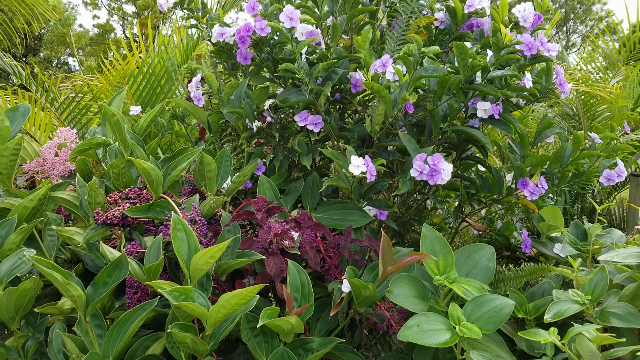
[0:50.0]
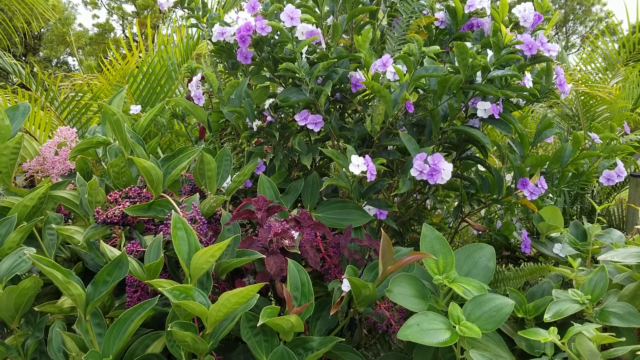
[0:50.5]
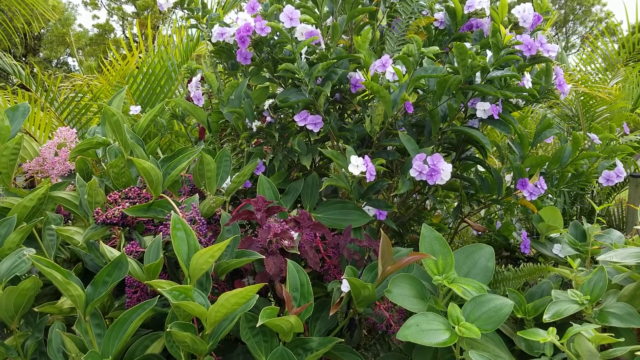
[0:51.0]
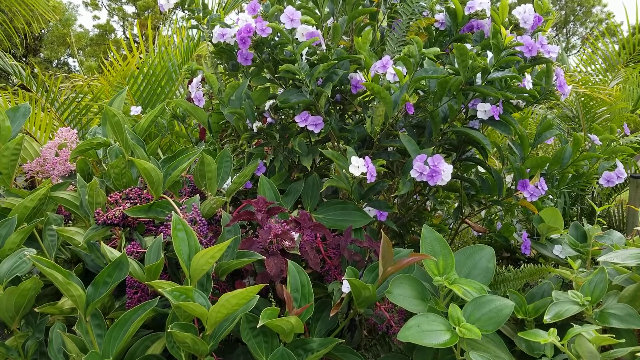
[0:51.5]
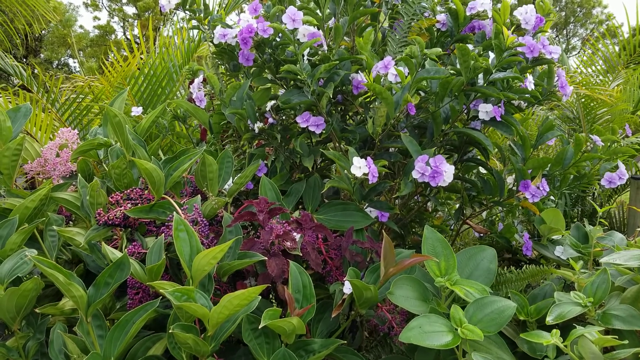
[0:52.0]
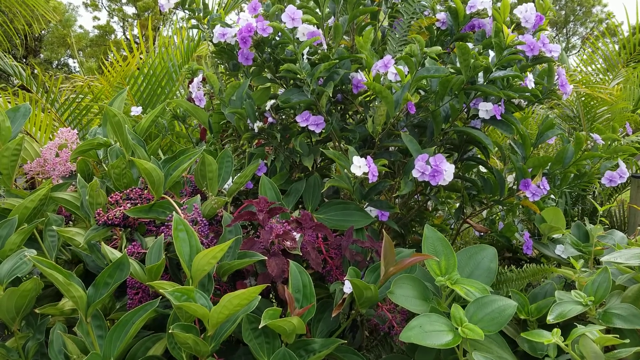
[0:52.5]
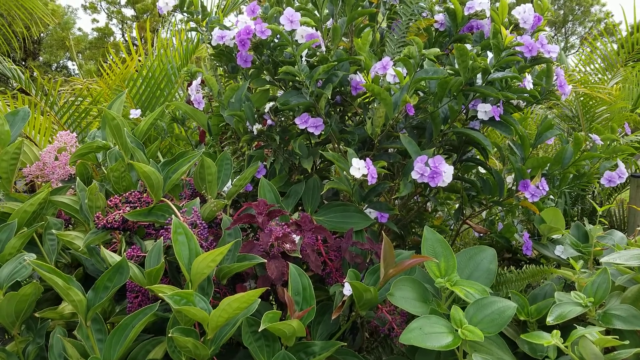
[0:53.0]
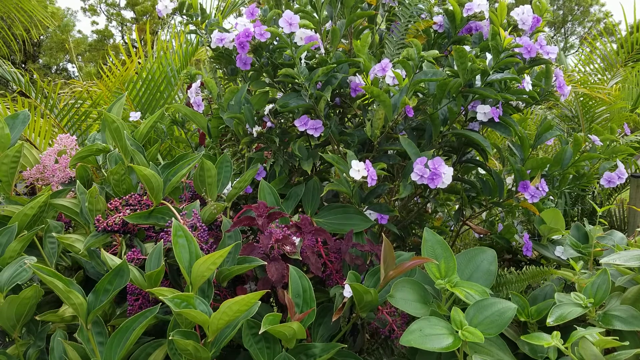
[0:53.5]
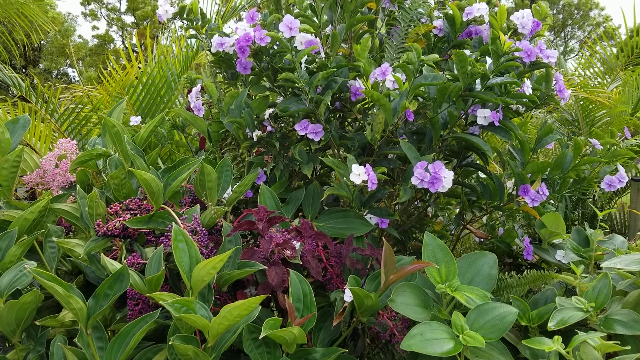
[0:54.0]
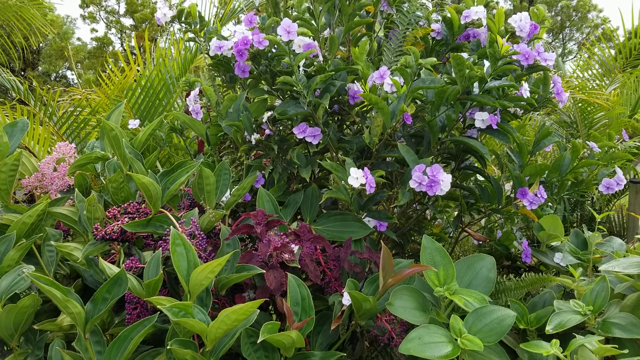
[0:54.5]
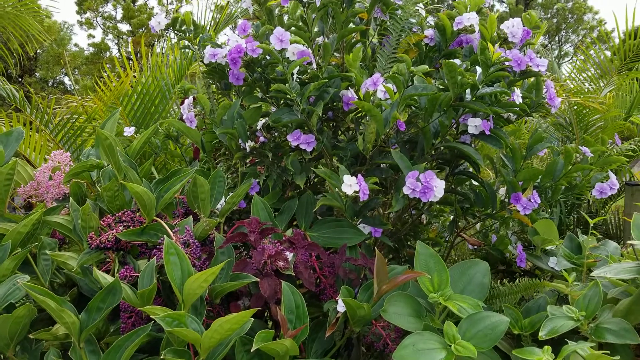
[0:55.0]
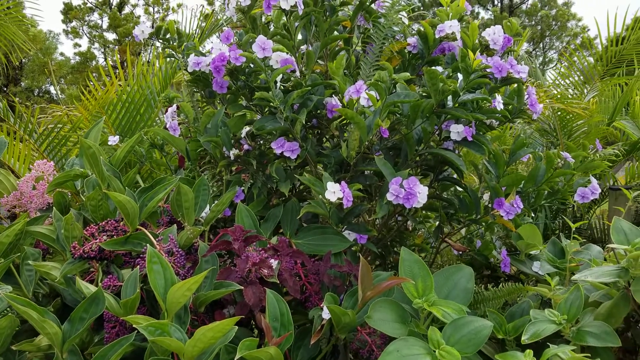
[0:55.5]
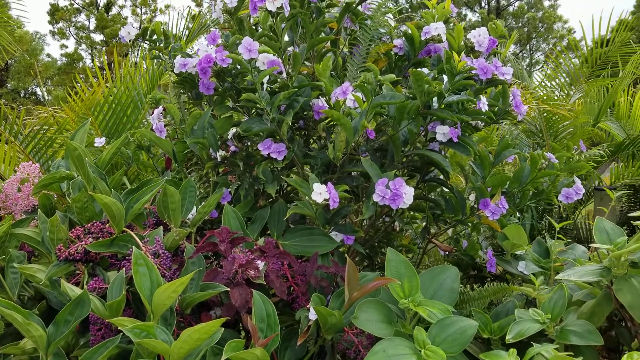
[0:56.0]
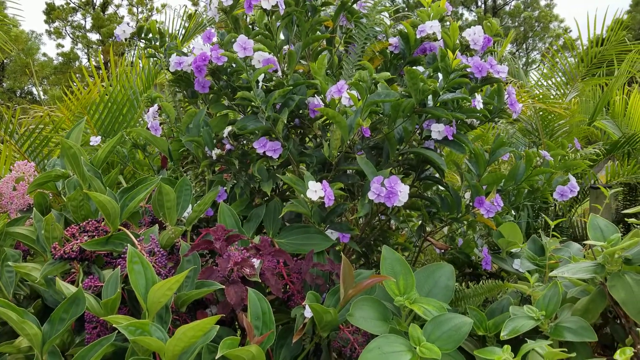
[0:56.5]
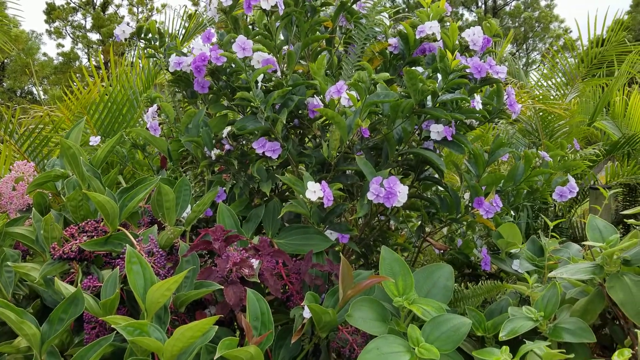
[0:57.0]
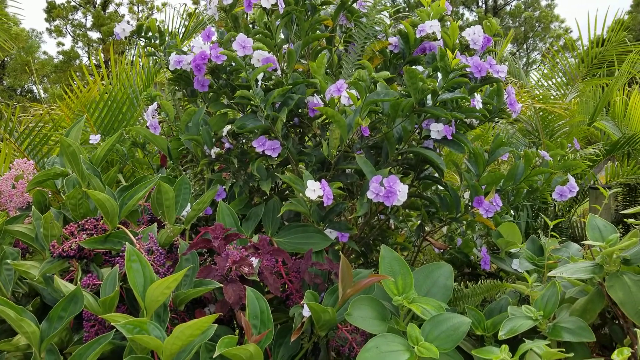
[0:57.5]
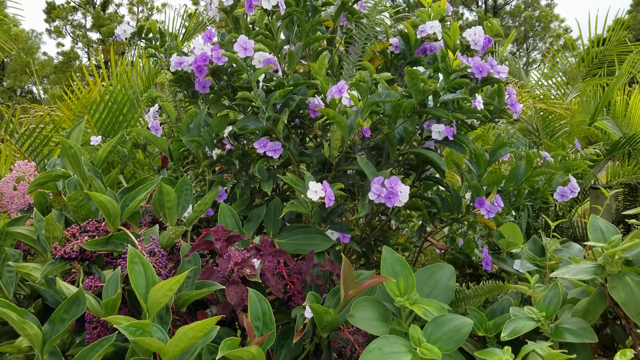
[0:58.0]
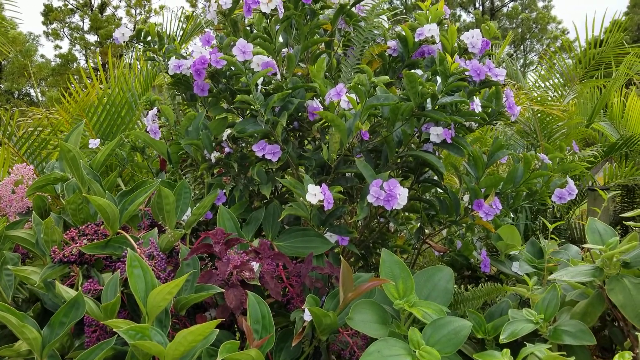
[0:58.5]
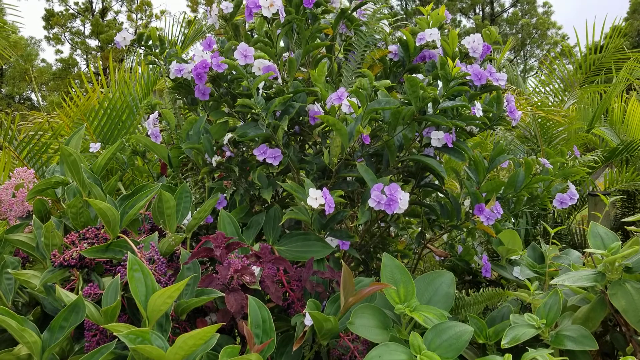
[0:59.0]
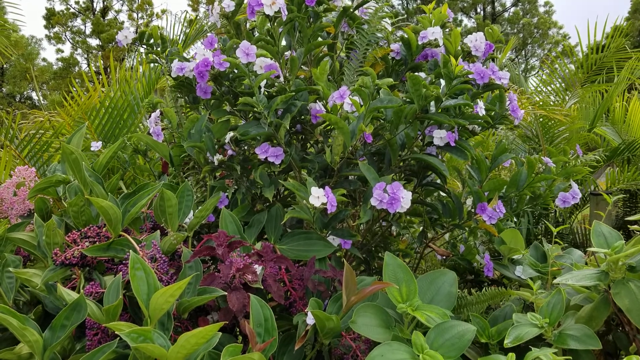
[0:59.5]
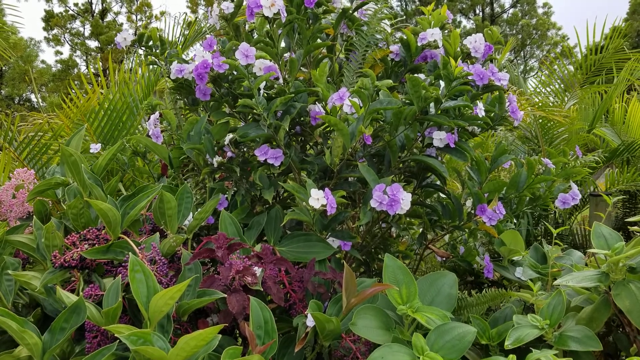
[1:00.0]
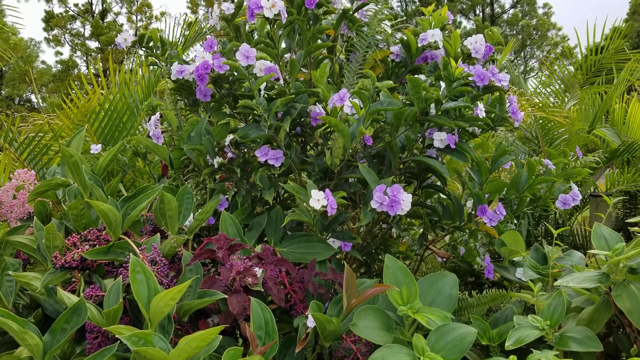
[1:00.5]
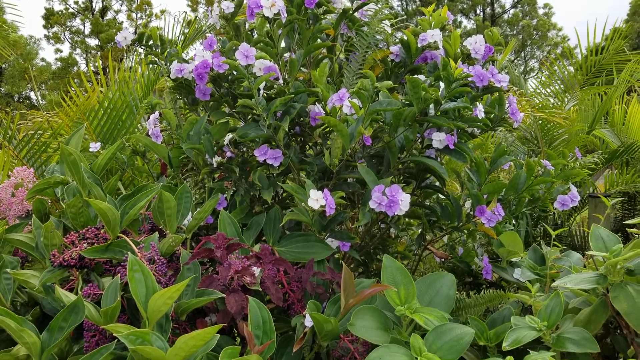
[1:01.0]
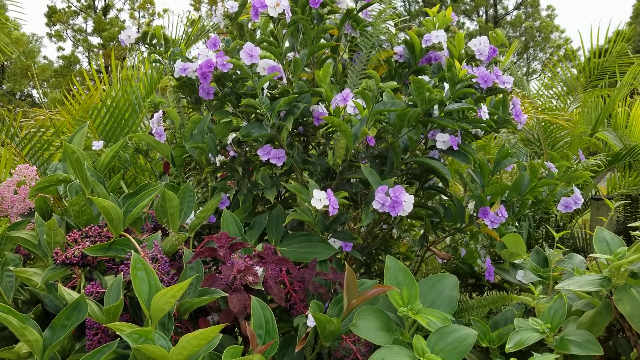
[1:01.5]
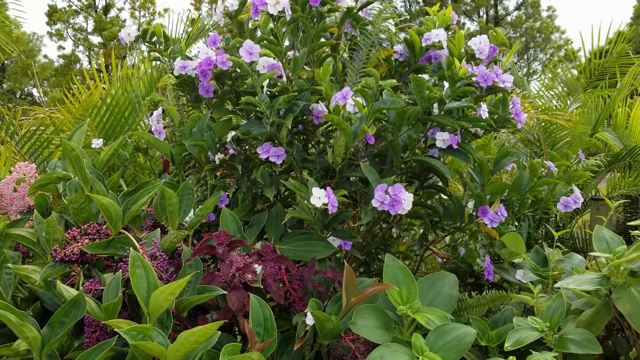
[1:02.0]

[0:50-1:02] The entire screen is made up of plants. The main plant is a dark green bush with light purple and white flowers growing at the ends of its branches, sprinkled throughout. To the left and right of the plant, behind it, are very tall plants with very long, skinny, pointed leaves on both sides. Small green plants only about an inch or two tall grow in front of the plant. A maroon plant is laying on the ground, and to the left of the bush is a small bunch of little pink flowers.